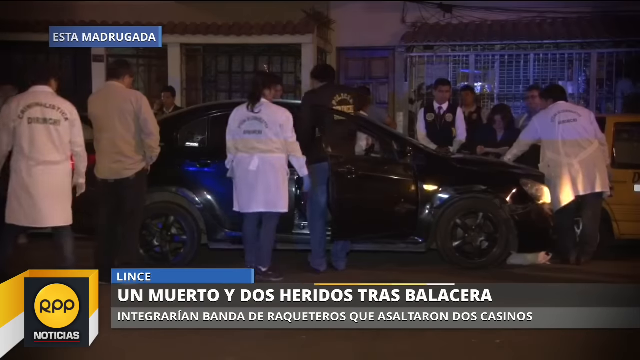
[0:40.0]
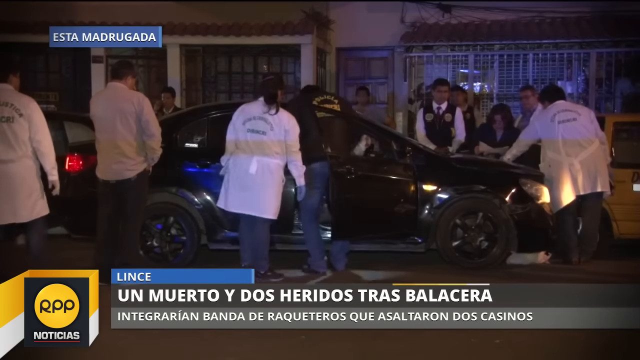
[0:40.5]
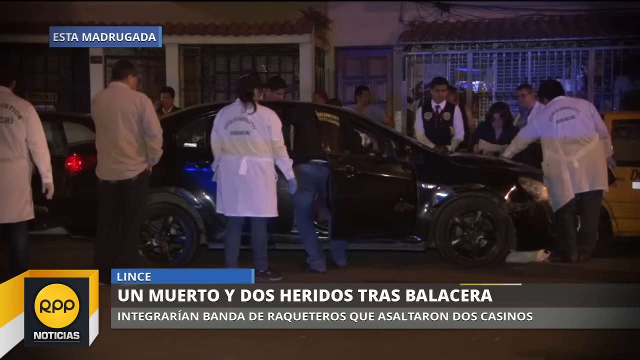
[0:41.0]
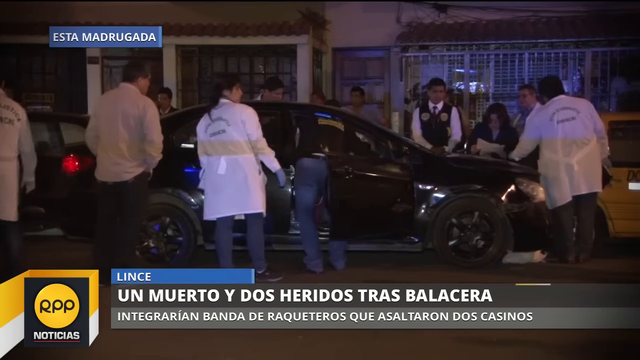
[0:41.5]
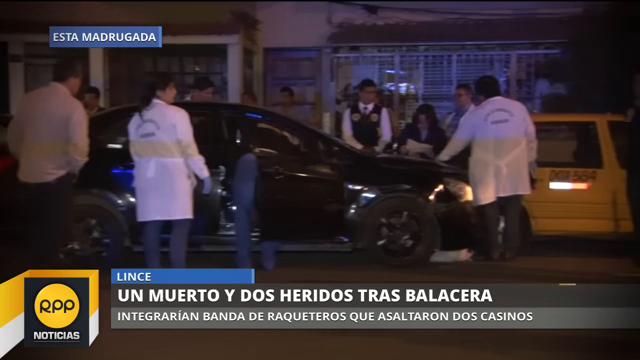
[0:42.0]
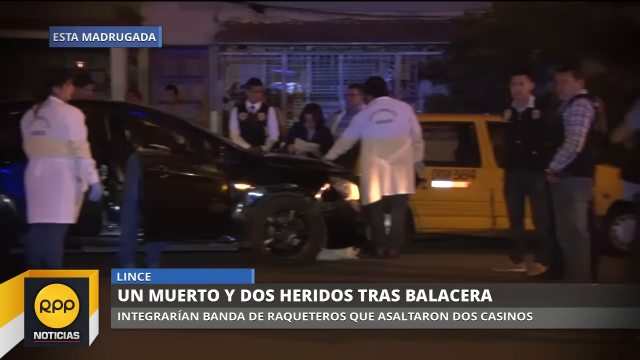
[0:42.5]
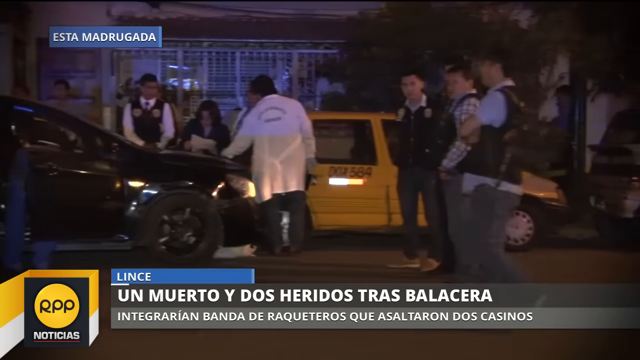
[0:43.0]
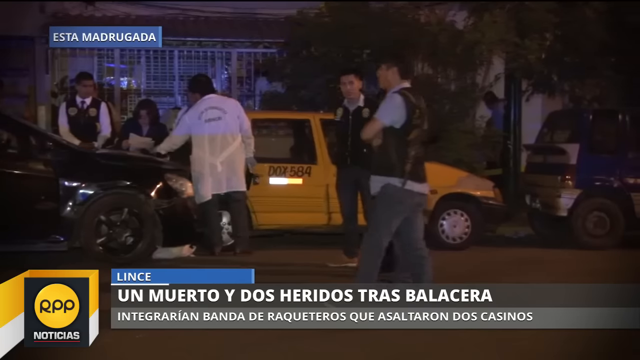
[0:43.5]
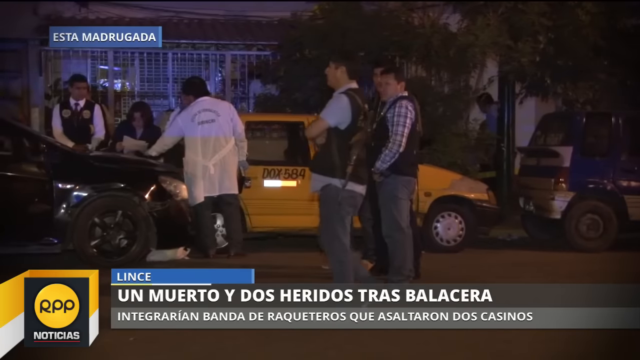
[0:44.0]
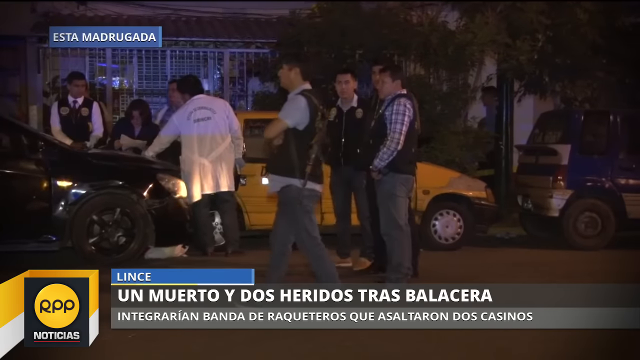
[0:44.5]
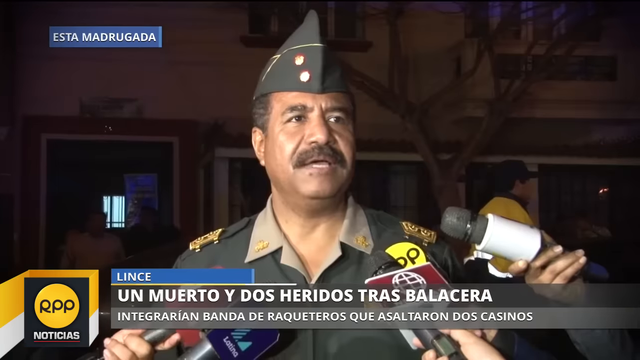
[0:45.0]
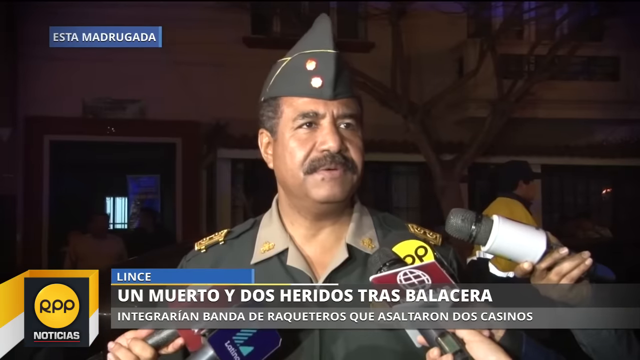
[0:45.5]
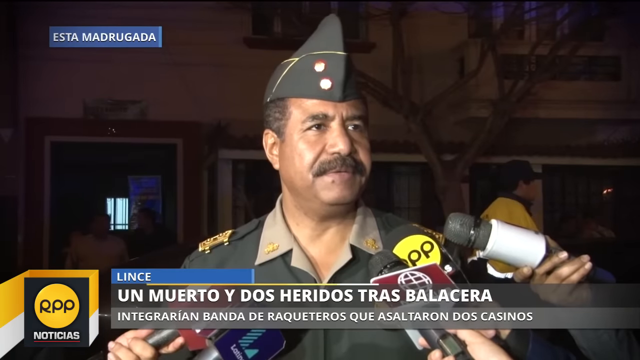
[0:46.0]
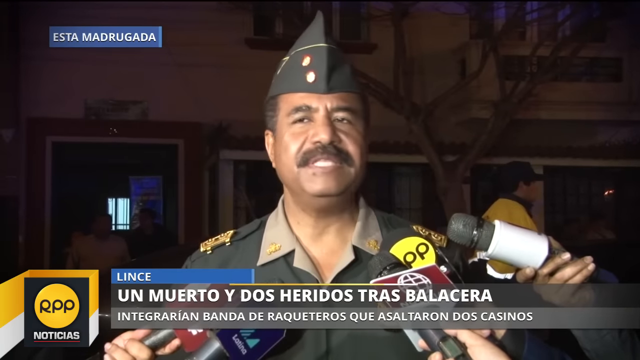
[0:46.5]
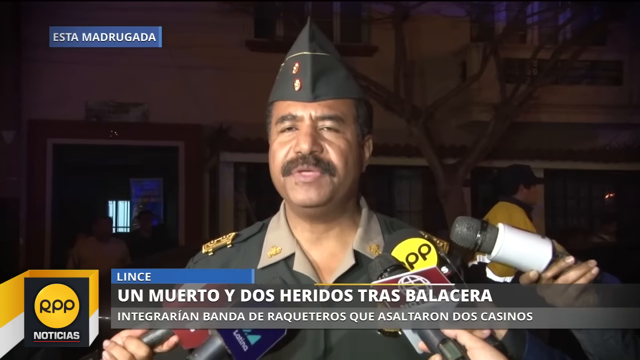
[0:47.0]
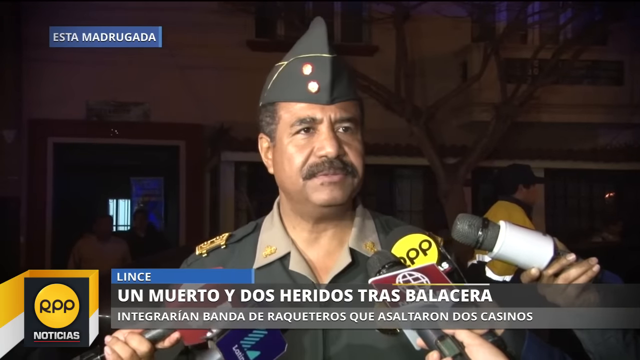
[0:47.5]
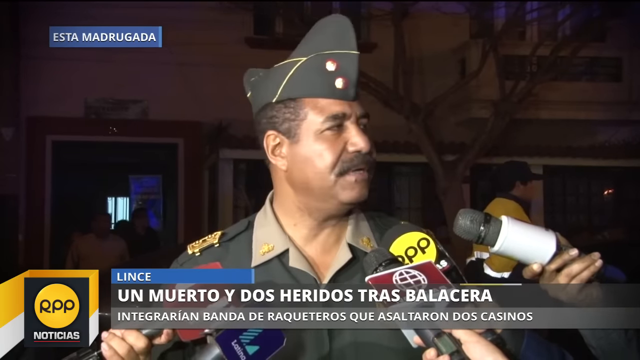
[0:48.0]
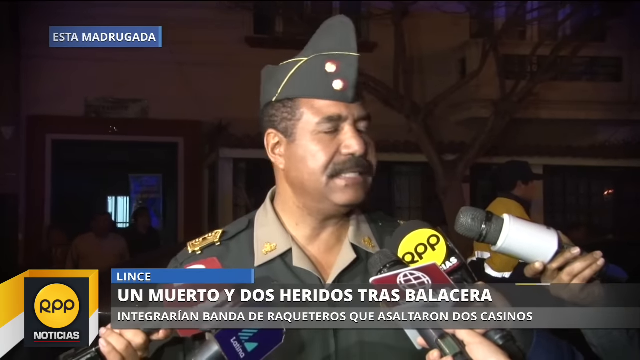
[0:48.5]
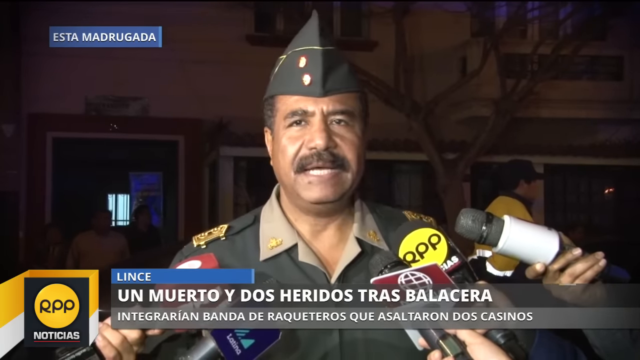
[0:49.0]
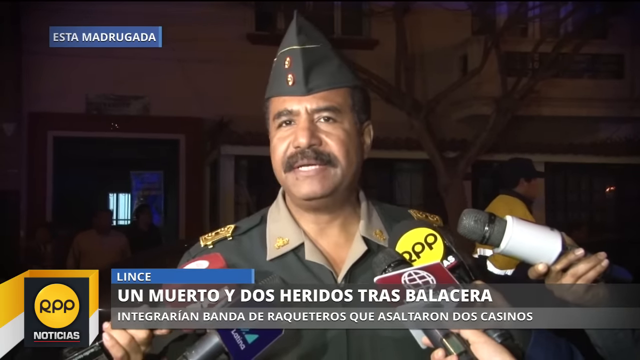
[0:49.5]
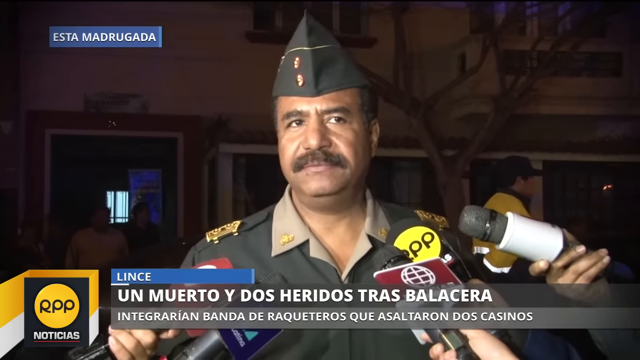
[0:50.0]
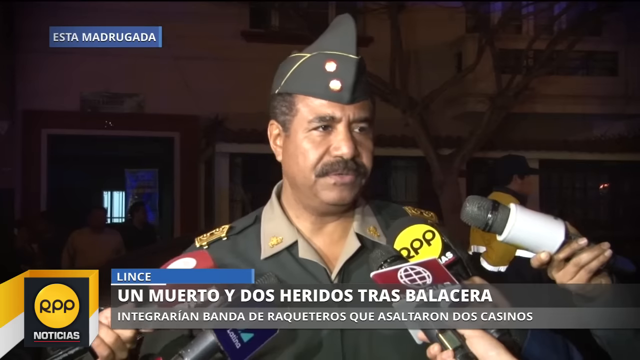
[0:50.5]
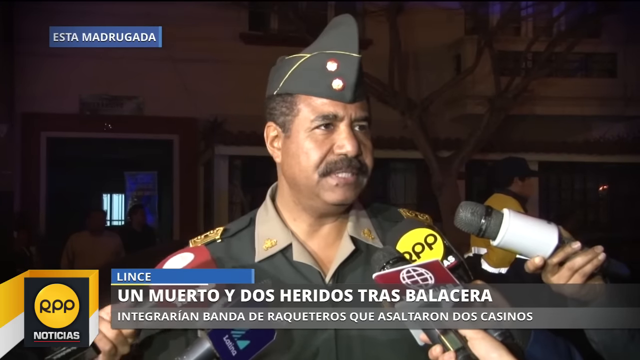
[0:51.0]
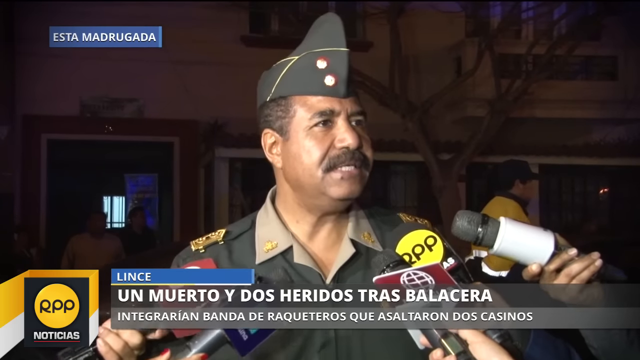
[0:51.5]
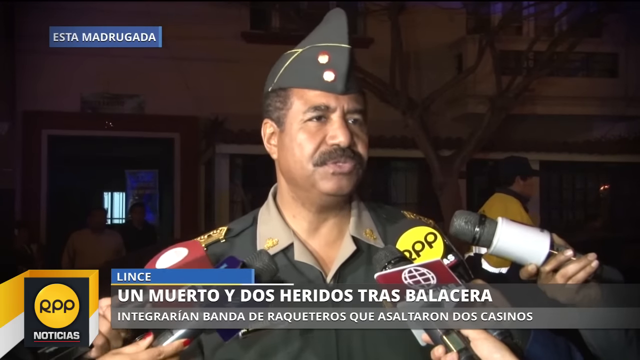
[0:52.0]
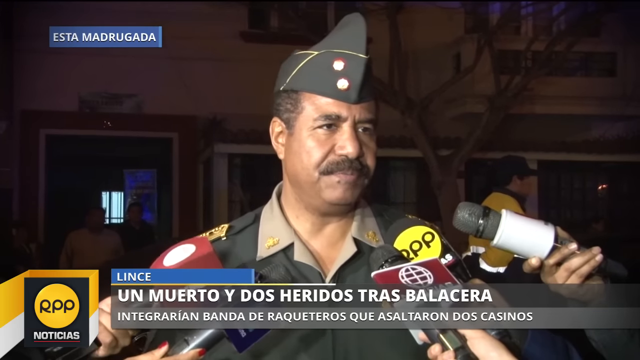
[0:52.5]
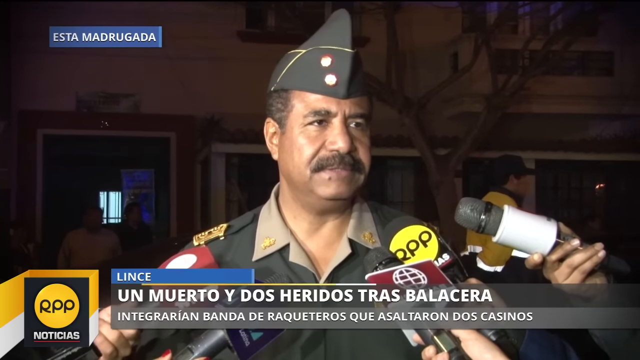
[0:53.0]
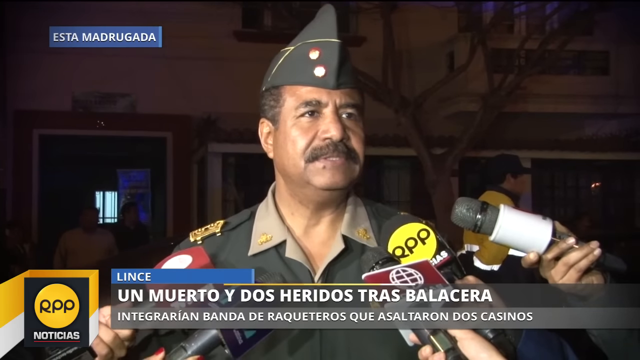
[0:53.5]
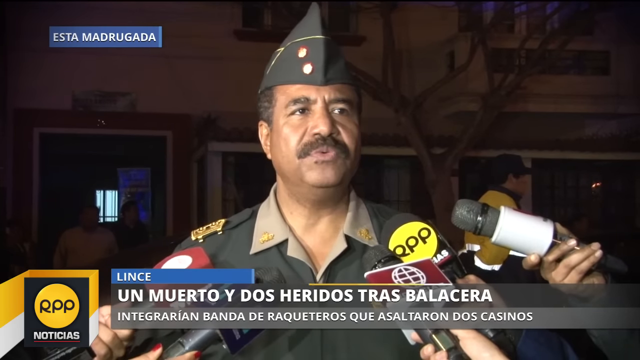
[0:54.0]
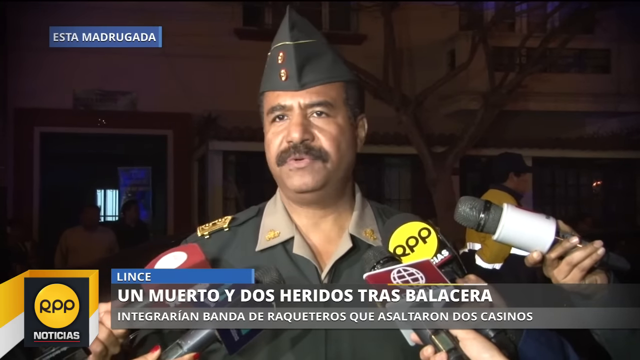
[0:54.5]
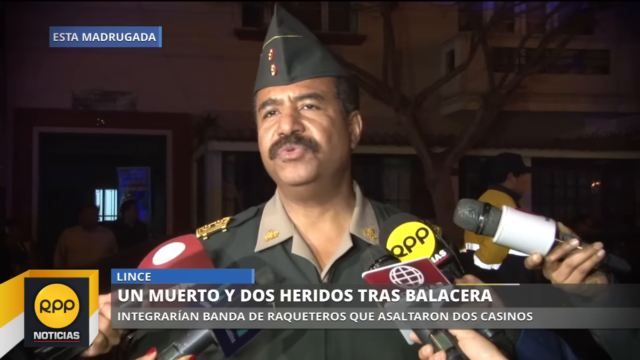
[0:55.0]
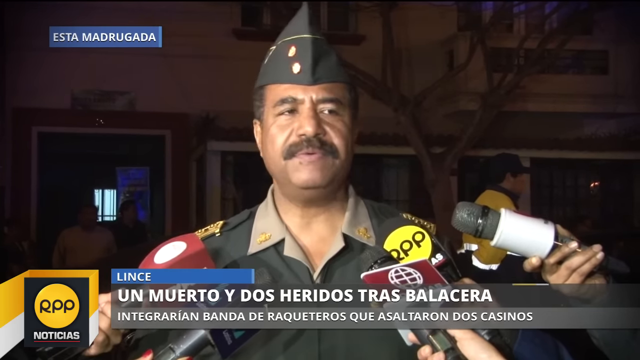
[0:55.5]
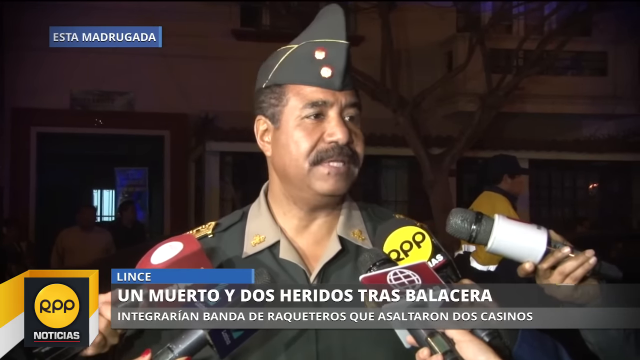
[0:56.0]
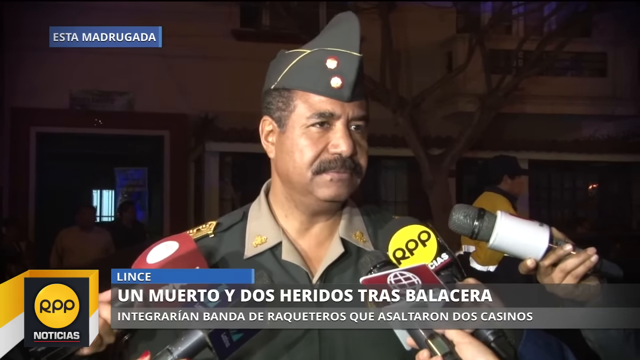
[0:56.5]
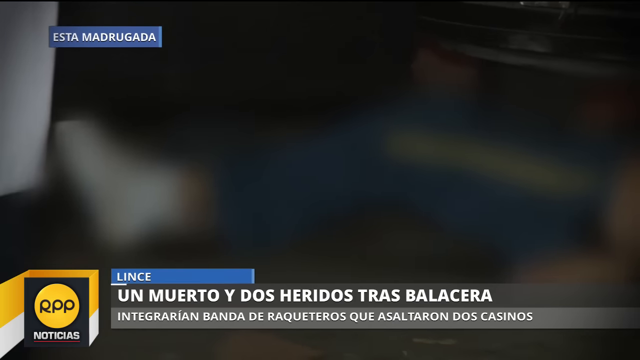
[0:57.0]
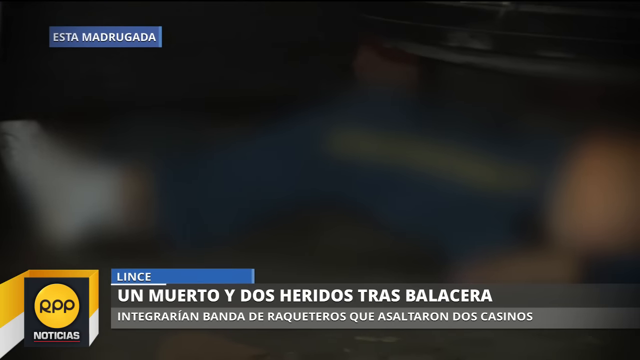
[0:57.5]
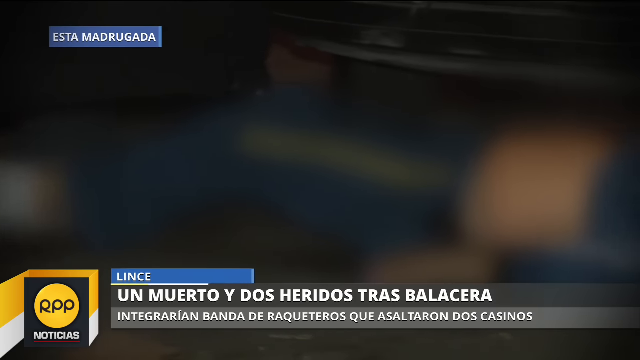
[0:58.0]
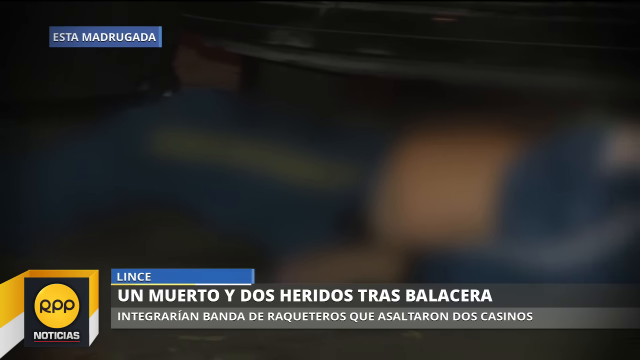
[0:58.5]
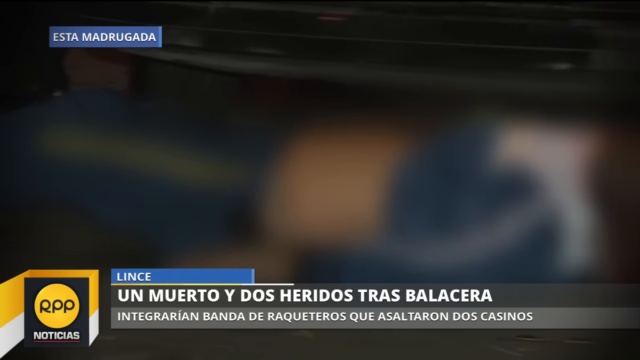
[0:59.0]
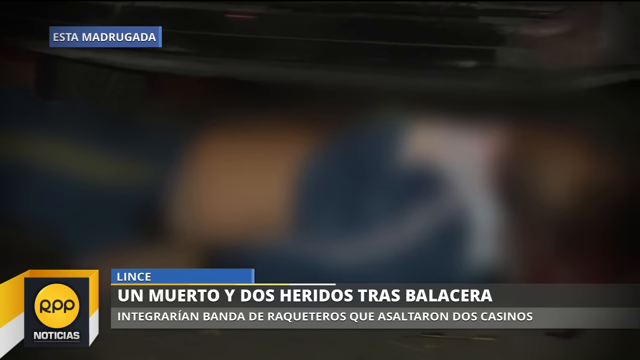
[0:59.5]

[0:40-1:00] A wide-angle shot shows a black four-door vehicle surrounded by officials, police and lab technicians in white lab coats; some reach inside the vehicle while others stand outside looking in. The shot pans to the right to a number of other police. The setting is a nighttime urban environment next to shops and buildings, with a number of vehicles parked on a side street. The video then shows a military official in uniform: a dark-skinned man with dark brown hair and a large mustache, wearing green military fatigues and a cap. He talks into a microphone toward the camera, looking over to reporters on the left and right, then addresses a particular reporter, looking to the left and then back to the right. Next comes a blurred-out shot of an individual lying on the ground who has been shot; as the camera pans, they are seen to be wearing a green tracksuit and lying at the base of the back of a vehicle.